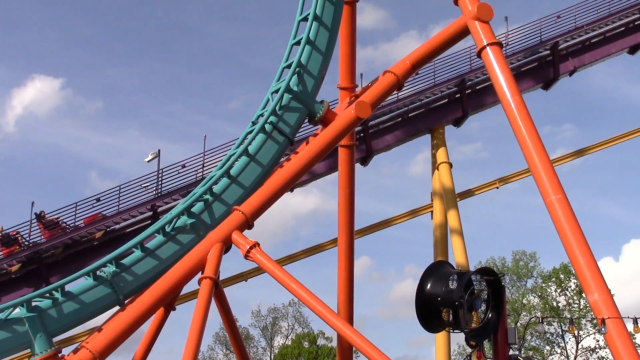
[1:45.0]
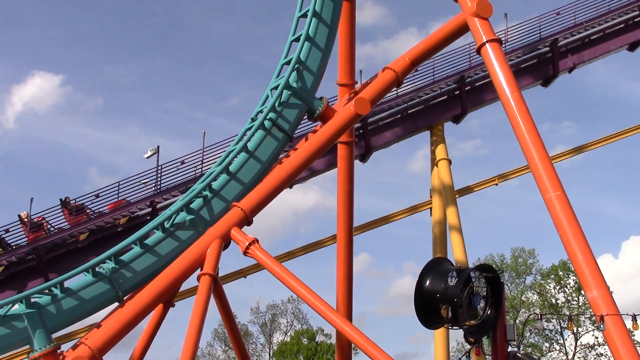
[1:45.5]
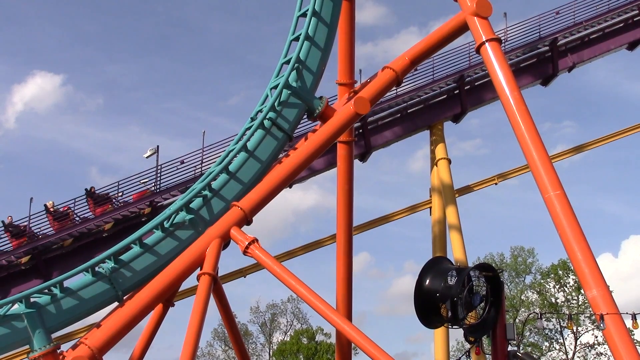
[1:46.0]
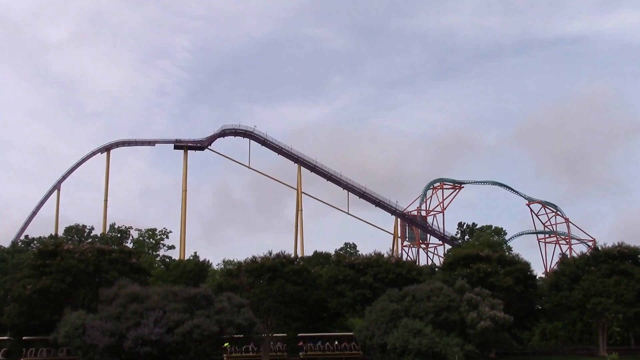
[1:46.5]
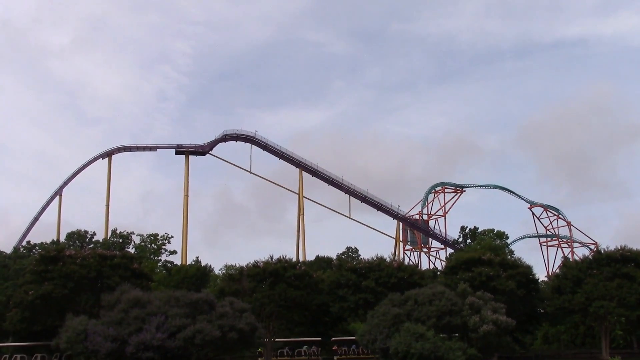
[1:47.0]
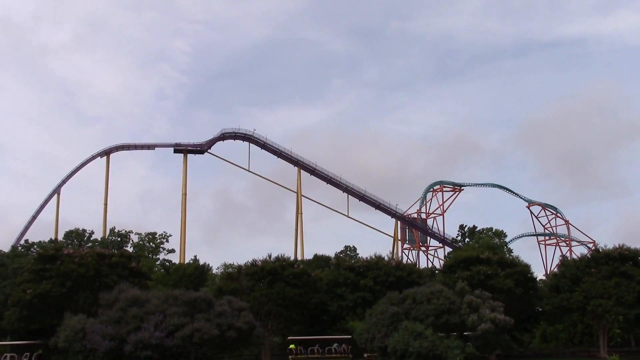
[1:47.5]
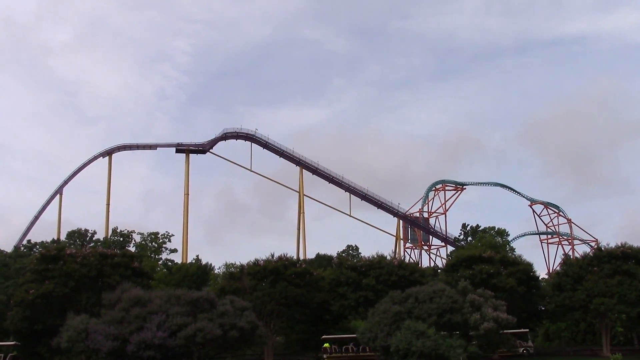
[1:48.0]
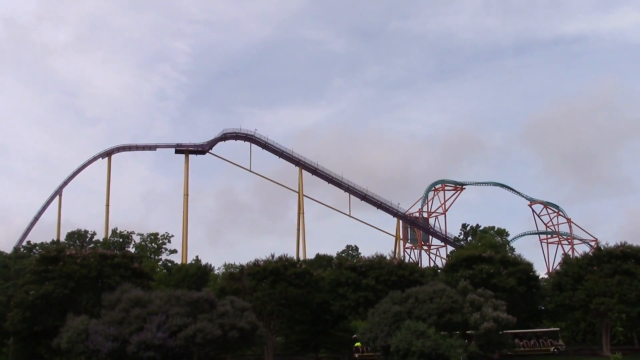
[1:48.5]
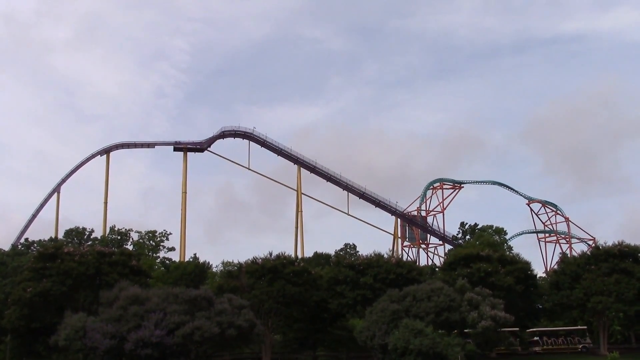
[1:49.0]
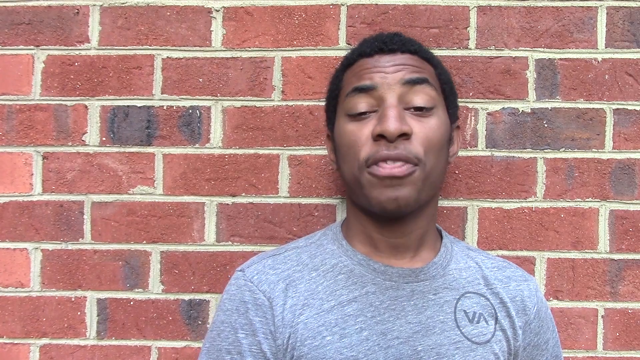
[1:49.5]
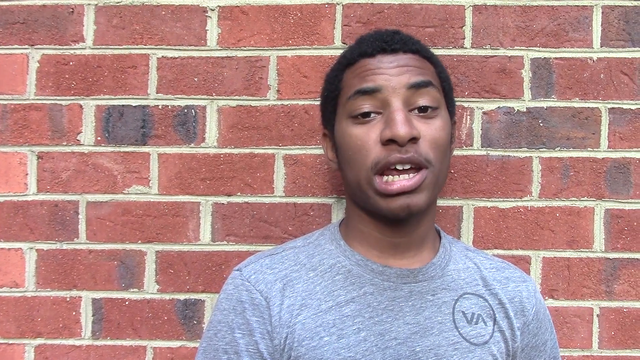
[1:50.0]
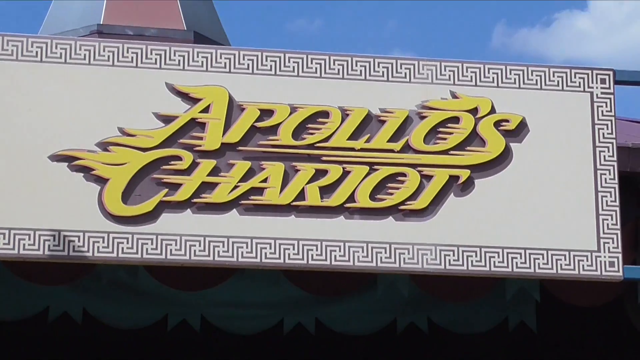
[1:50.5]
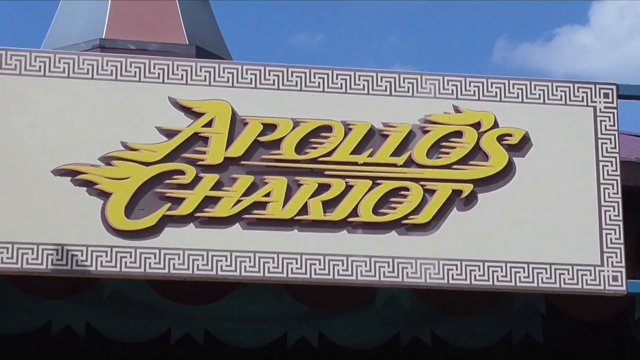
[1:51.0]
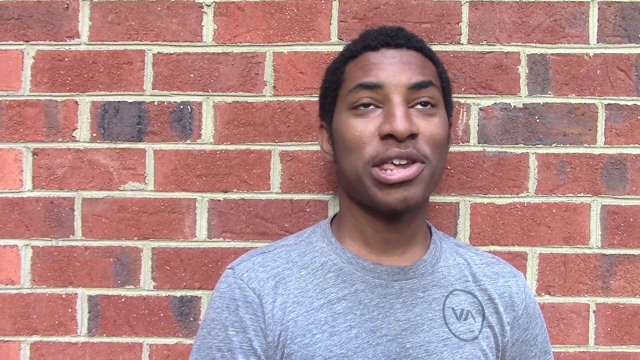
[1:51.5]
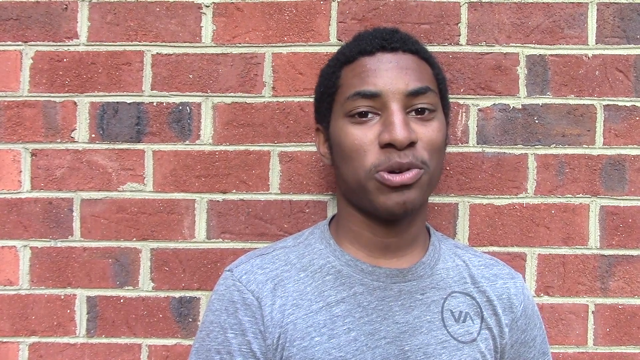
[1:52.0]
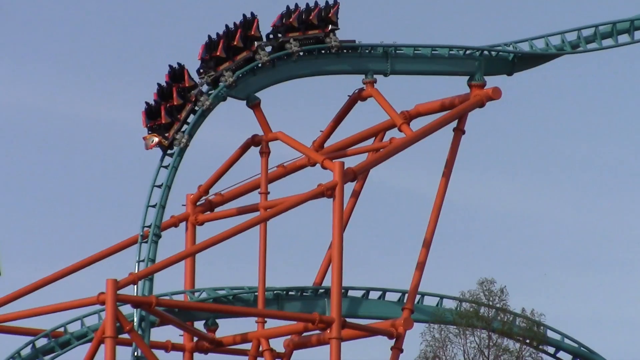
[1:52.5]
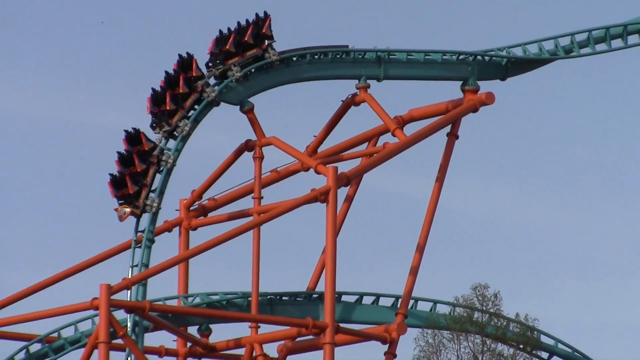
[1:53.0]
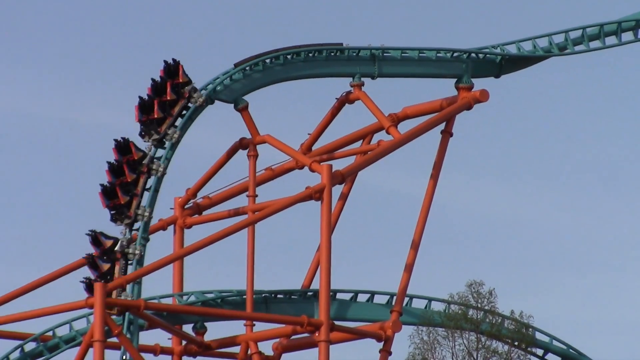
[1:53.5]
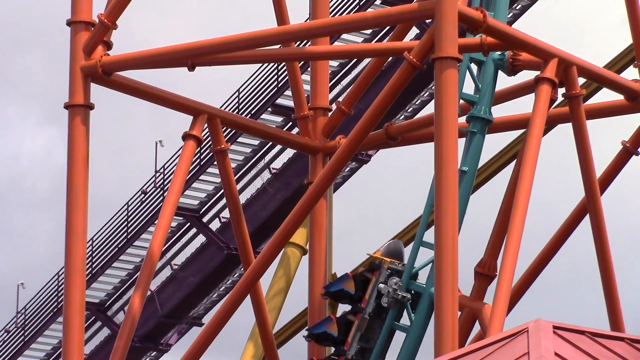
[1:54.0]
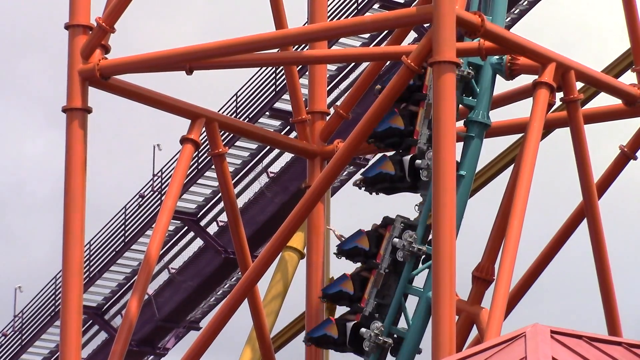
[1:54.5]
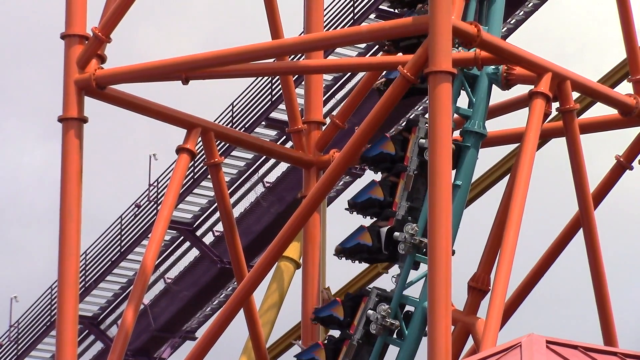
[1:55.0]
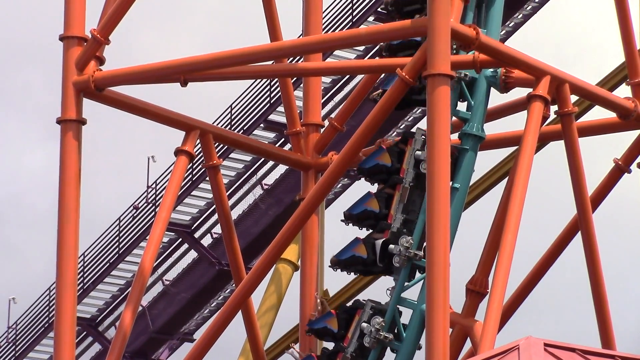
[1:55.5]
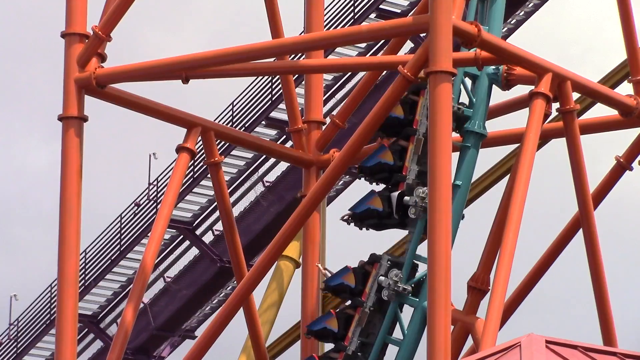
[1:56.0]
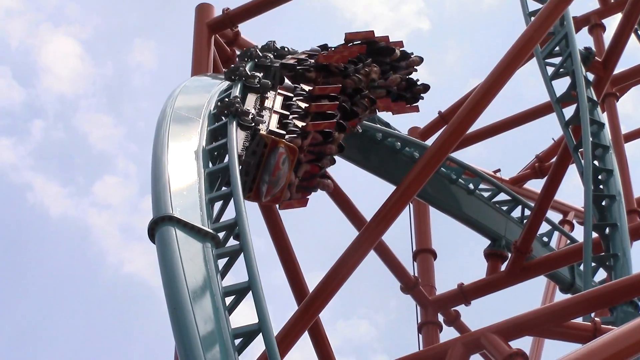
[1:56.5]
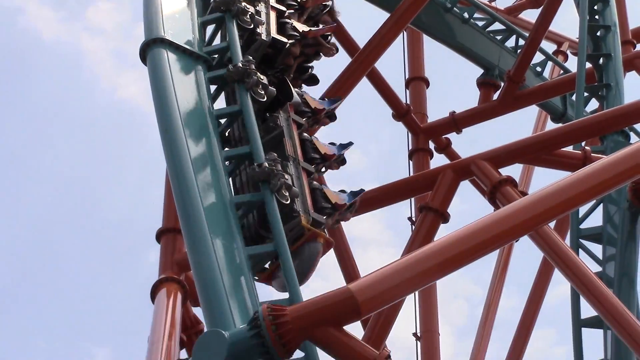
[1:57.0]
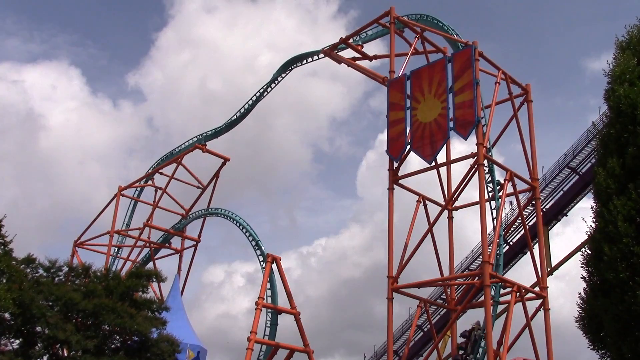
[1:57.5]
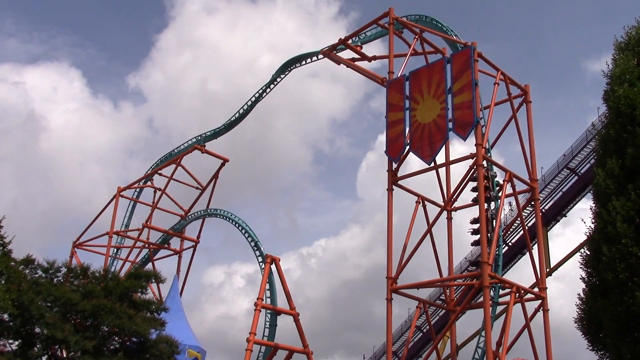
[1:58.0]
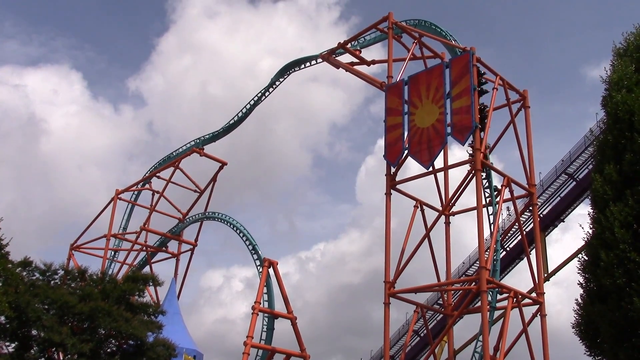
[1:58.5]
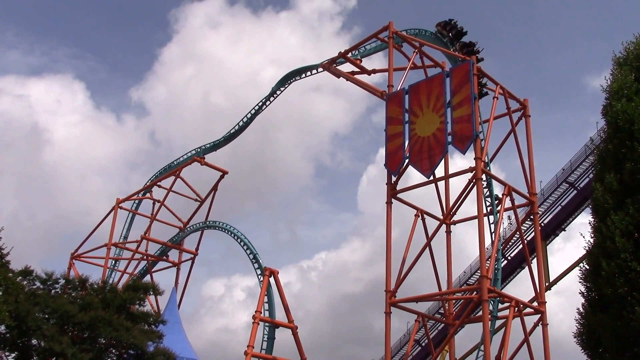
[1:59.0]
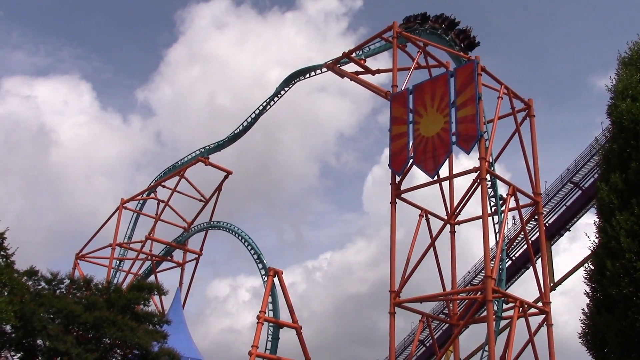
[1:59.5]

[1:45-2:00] A roller coaster starts up a loop on the same light green tracks with orange piping. A far shot shows what looks like most of the ride: the green track with red or orange piping in the far background, and in front of it a long ramp extending up into the sky and down again, apparently supported by yellow piping, with a line of dark green trees in the very foreground. The scene cuts to an African-American man with short black hair and a gray t-shirt, standing in front of a red brick wall with white or light gray mortar, speaking to the camera. Next is the sign of another ride, with the words "Apollo's Chariot" in 3D yellow letters over a white board with some type of square pattern border. The man talks to the camera again, presumably about the Apollo ride. The coaster on the green track with orange piping goes down a very steep vertical drop, then goes up what appears to be a loop-de-loop, slows near the top, and reverses backwards. Another part shows it descending a loop-de-loop almost at an angle, with riders holding their hands up and having a good time. It then goes up an almost vertical incline and levels off at the top into more of a straight runway.